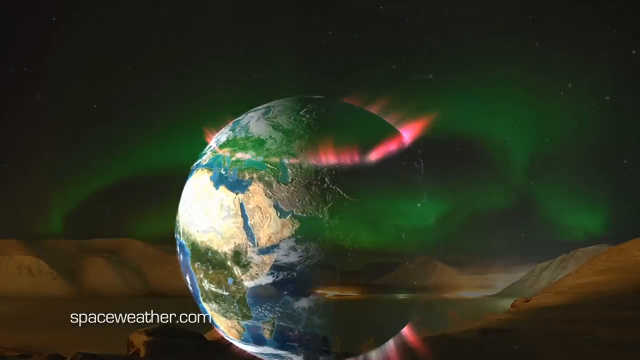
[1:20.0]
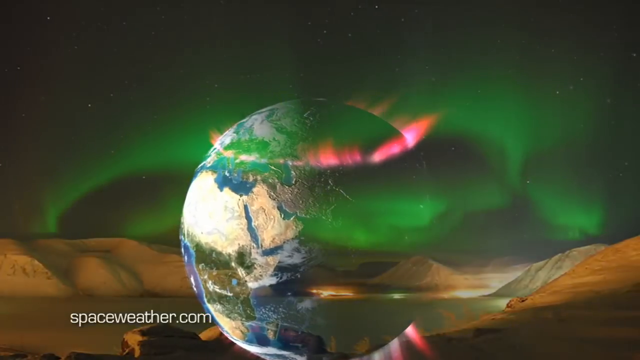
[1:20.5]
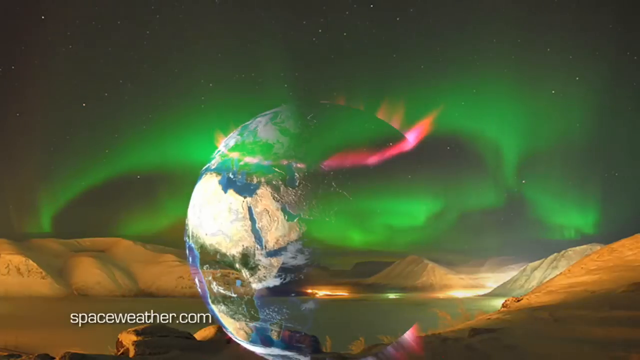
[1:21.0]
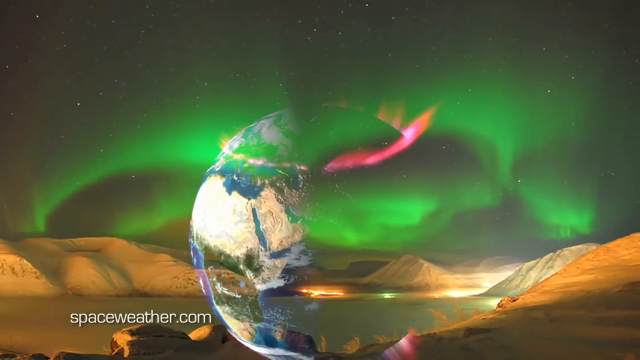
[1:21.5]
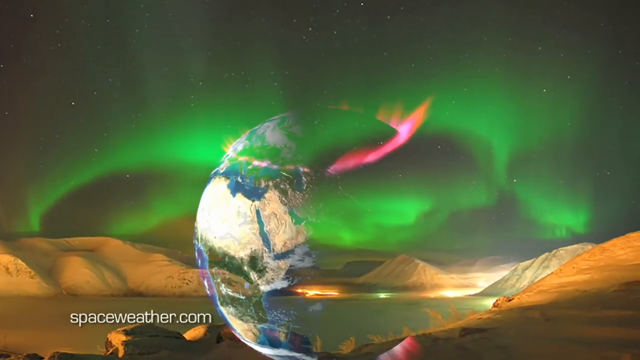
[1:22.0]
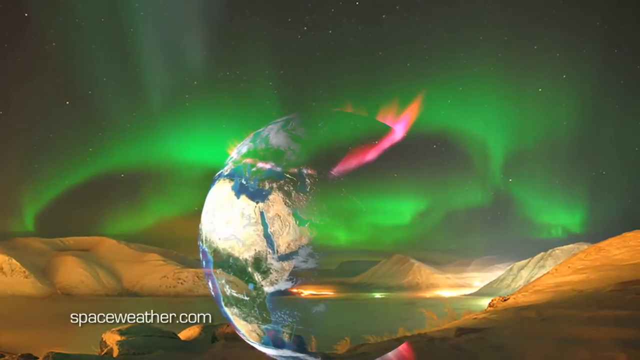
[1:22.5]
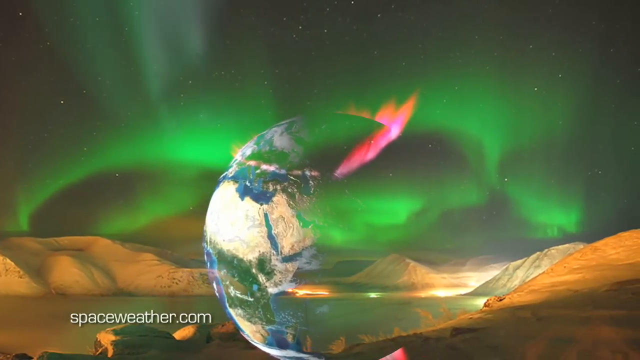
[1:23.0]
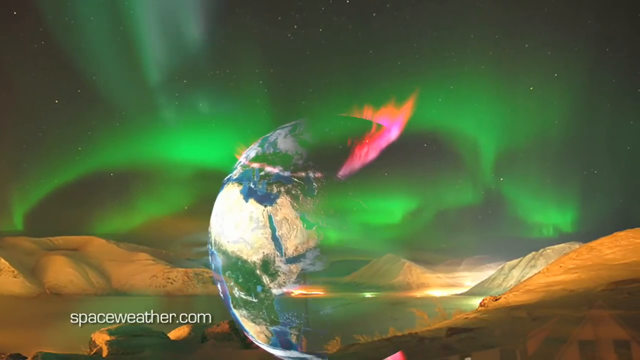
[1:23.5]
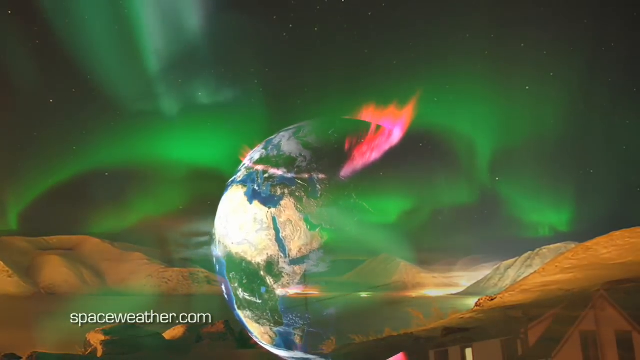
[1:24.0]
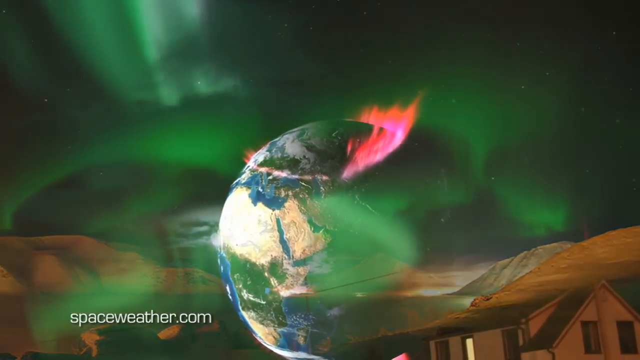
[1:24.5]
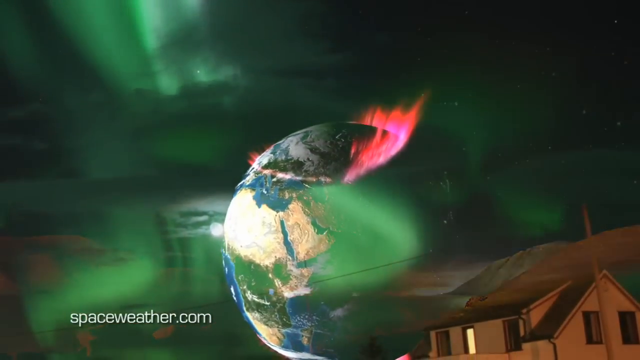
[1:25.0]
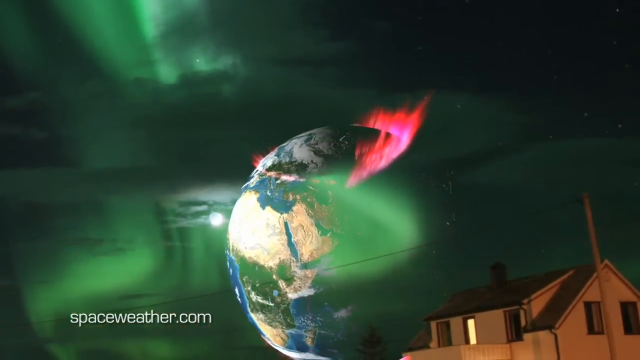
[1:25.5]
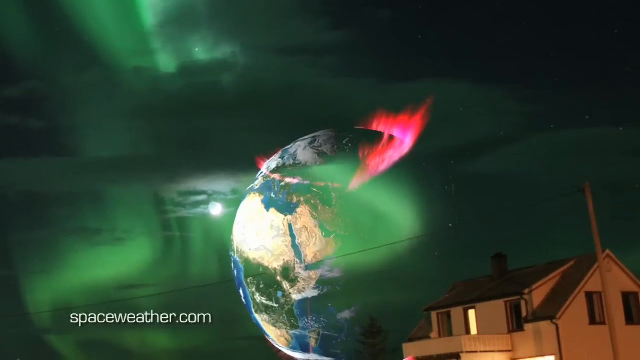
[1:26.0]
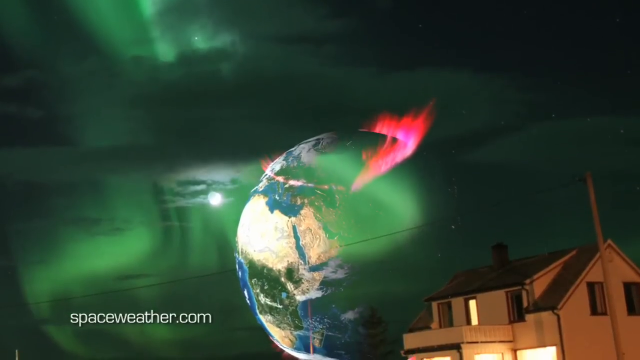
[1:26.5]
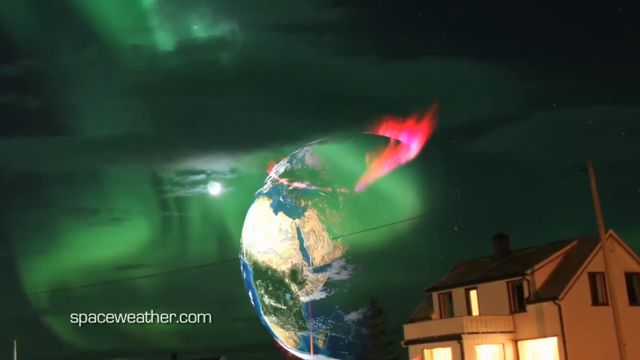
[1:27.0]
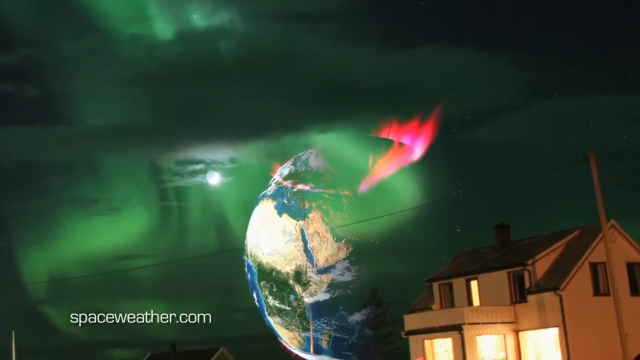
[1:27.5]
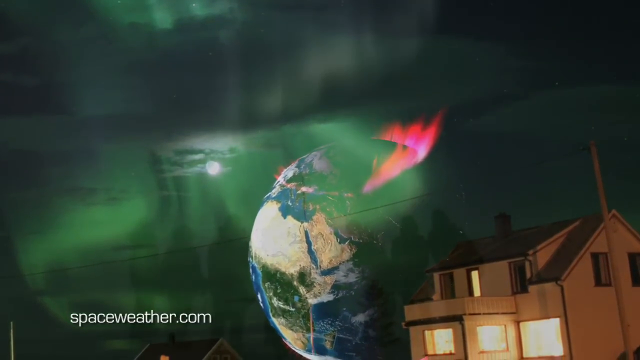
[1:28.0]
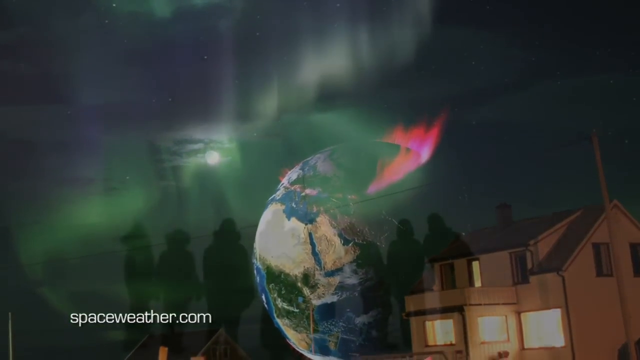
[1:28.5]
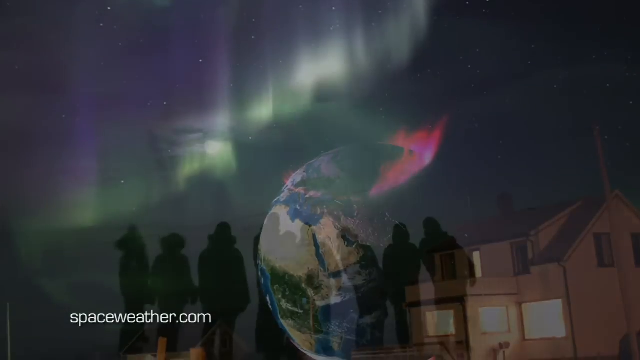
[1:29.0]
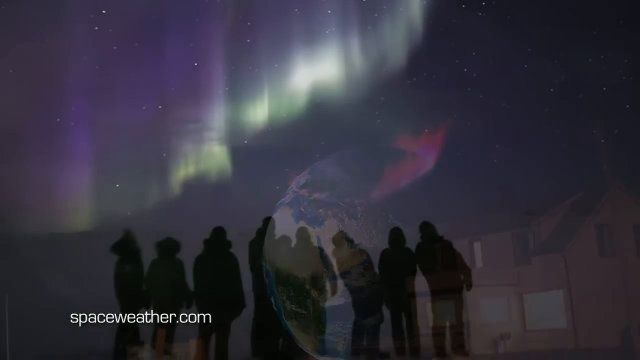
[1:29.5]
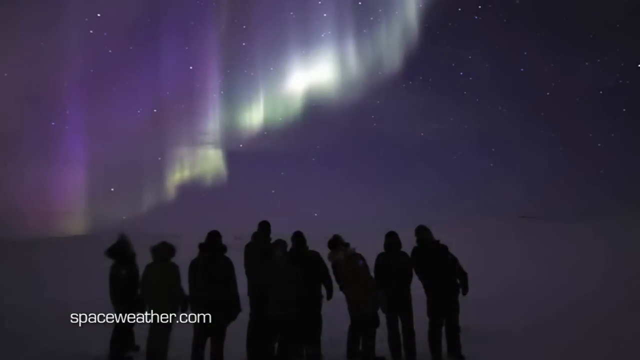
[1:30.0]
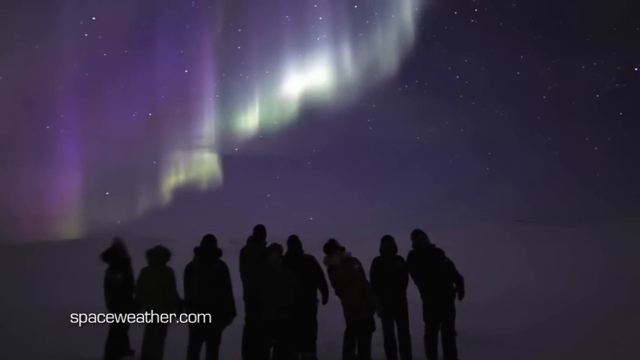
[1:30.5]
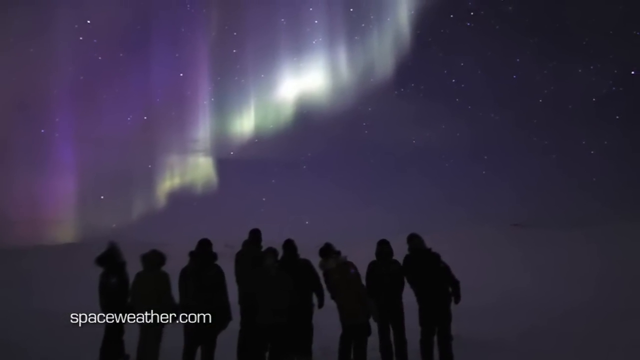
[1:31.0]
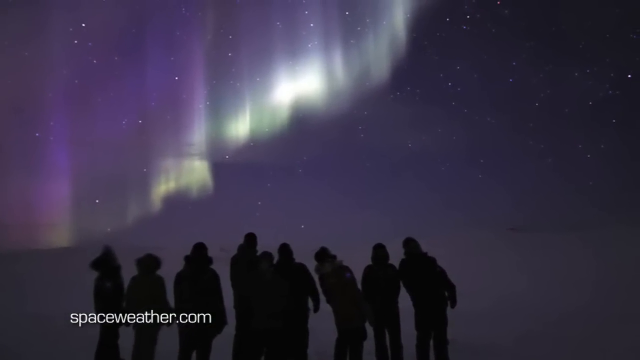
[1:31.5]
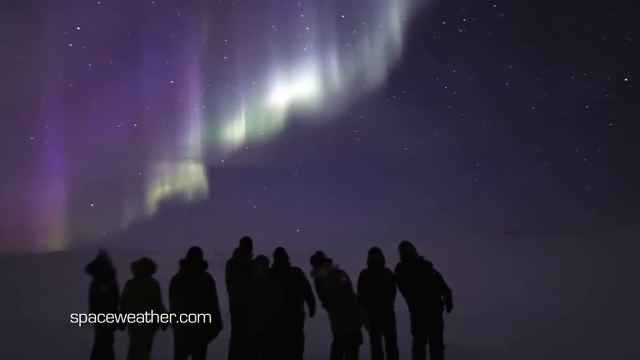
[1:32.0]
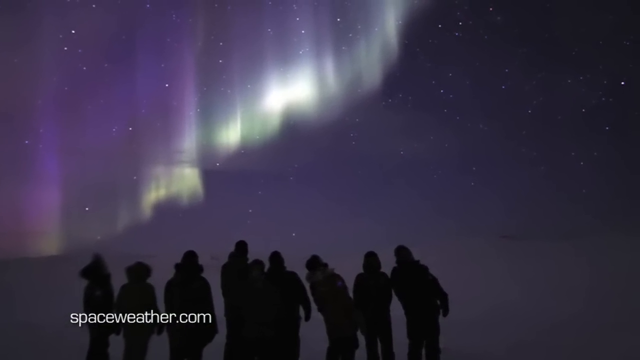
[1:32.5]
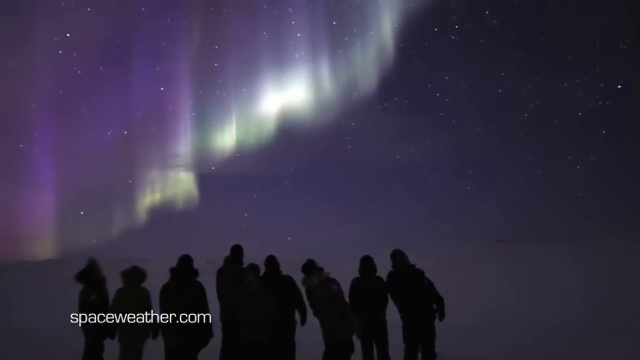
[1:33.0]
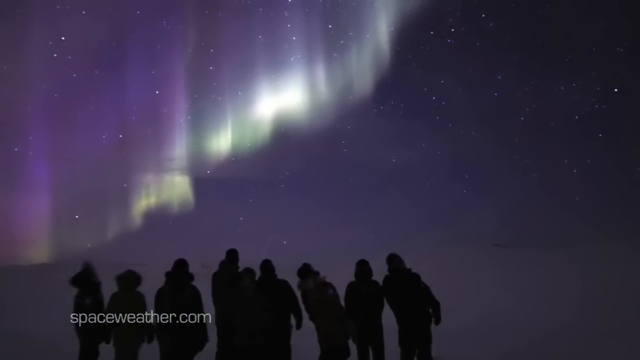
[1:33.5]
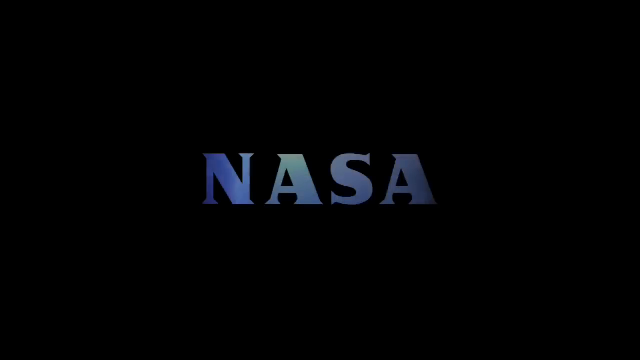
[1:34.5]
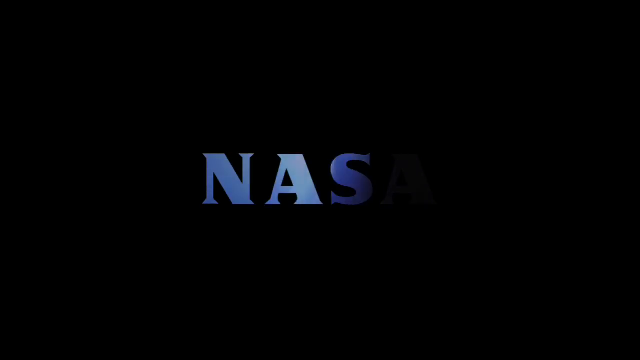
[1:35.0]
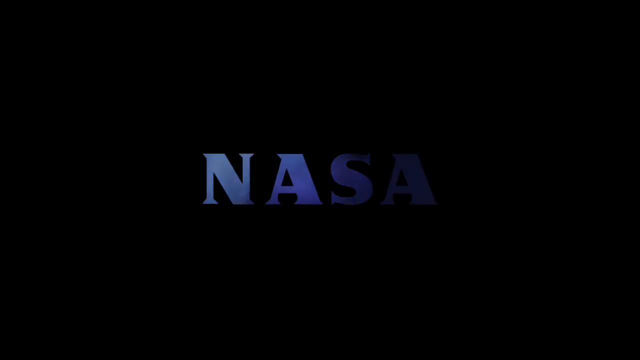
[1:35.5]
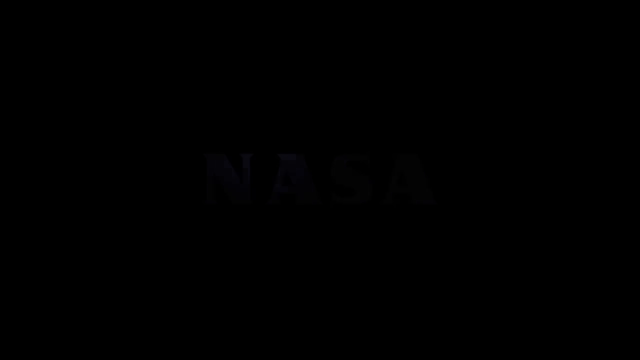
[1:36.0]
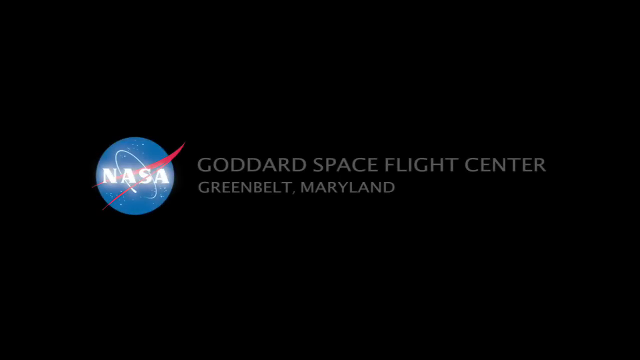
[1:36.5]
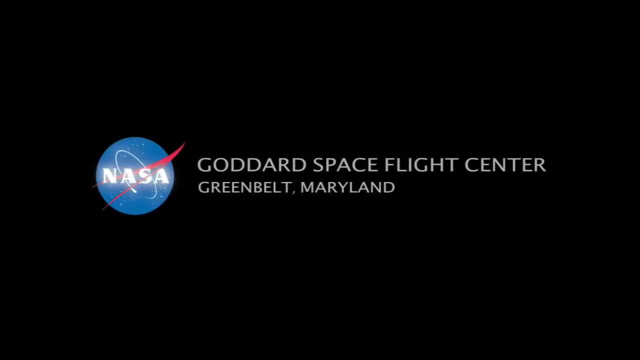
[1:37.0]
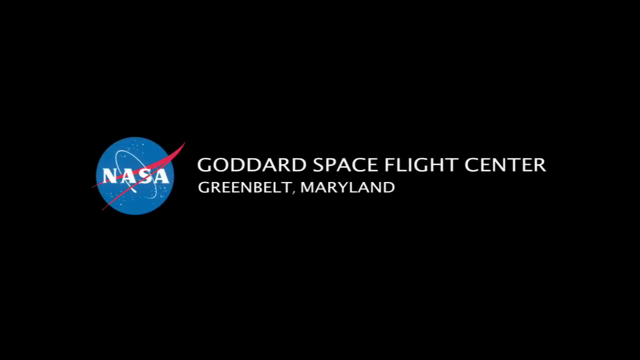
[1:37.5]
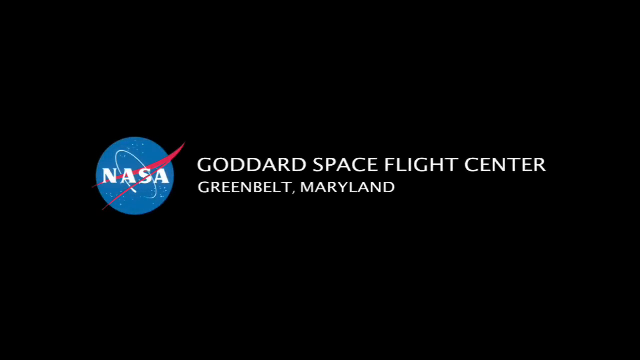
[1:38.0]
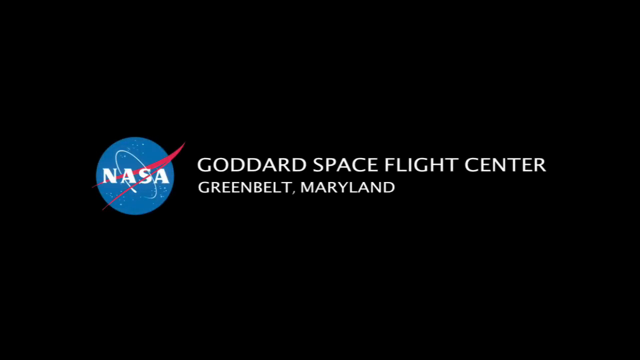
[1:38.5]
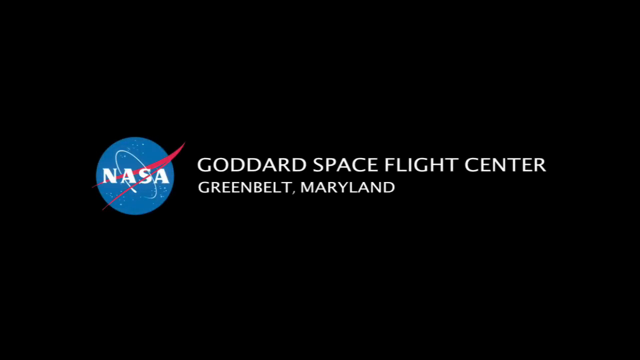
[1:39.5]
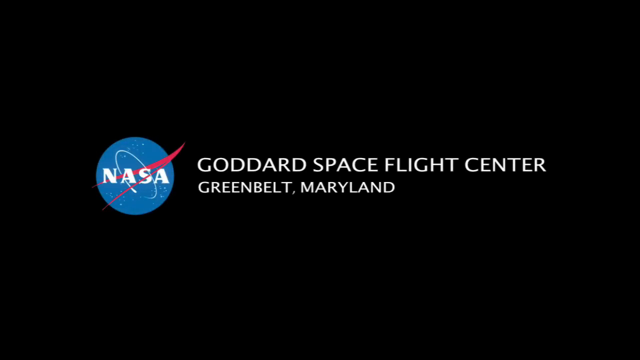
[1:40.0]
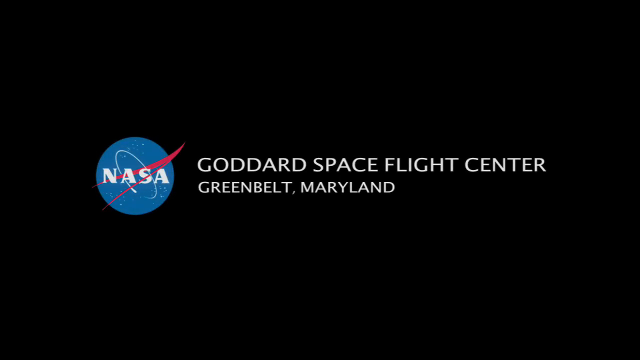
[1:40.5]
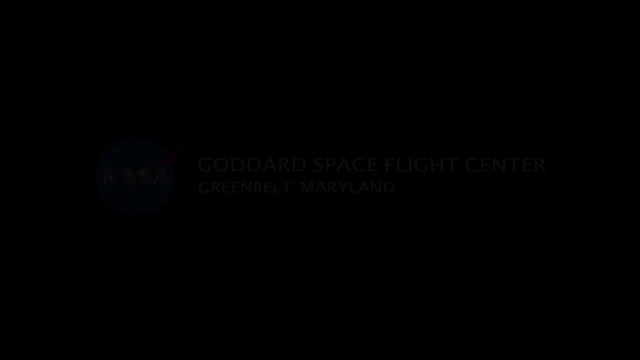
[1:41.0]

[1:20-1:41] A graphic shows the planet Earth as seen from space, with a ring of red light encircling the whole globe around its top. It is superimposed on an image of mountains and rocks beneath and green sky above, and as the Earth slowly fades away the graphic changes to a picture of houses and roads with the green aurora borealis in the sky. Nine people stand in the dark with their backs to the viewer, heads raised, looking up at the night sky and the stars, toward lights in the top left-hand corner of the sky that seem to be flickering and moving across in the aurora borealis. The graphic then changes to a NASA logo, a blue circle with orbital stars, and the words "Goddard Space Flight Center, Greenbelt, Maryland" appear on the screen, identifying who produced the video.